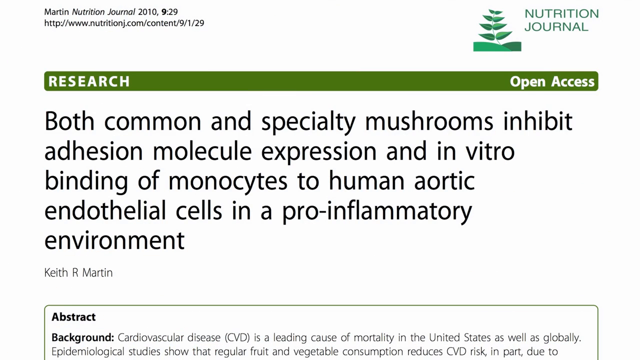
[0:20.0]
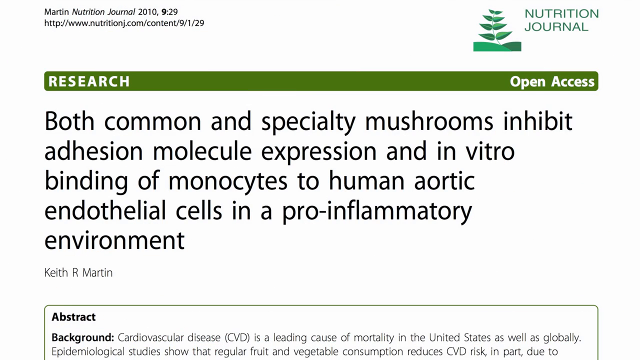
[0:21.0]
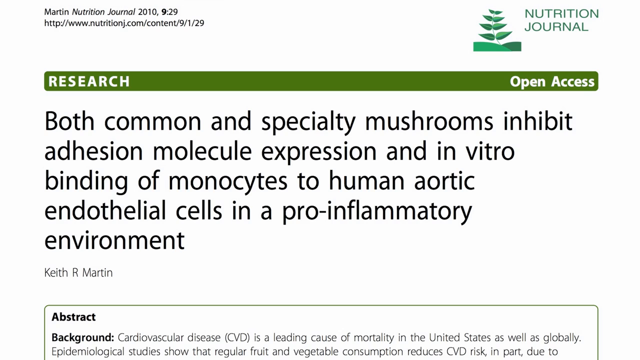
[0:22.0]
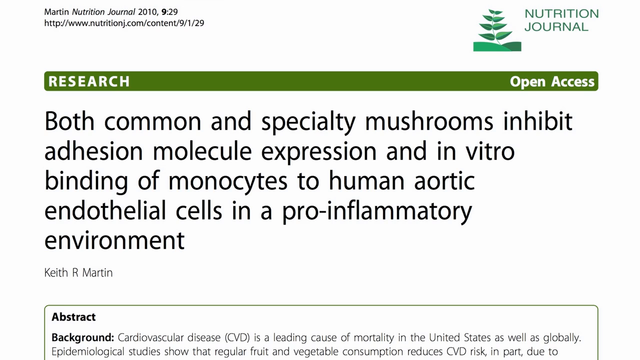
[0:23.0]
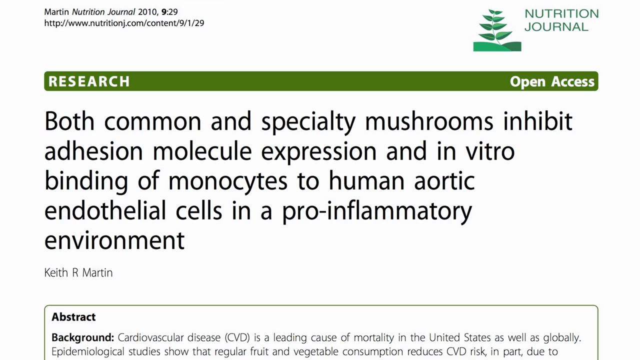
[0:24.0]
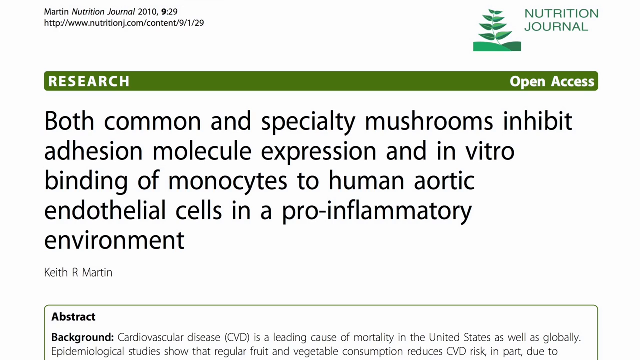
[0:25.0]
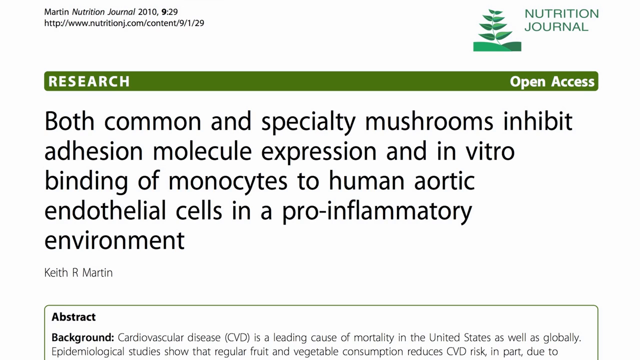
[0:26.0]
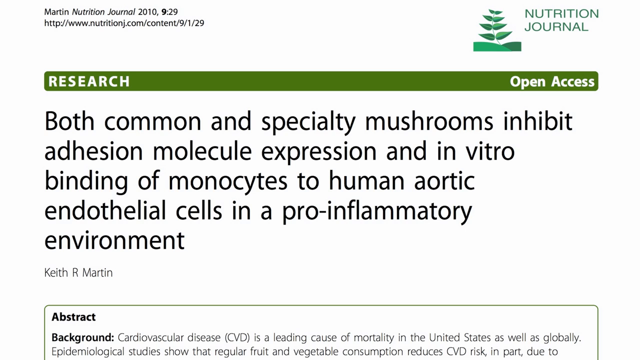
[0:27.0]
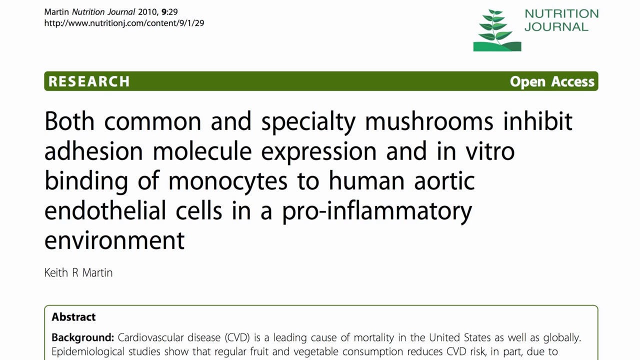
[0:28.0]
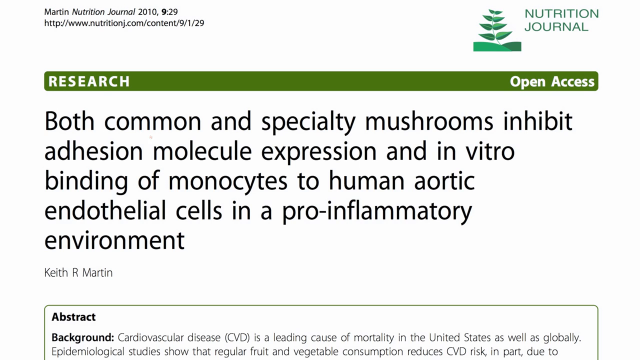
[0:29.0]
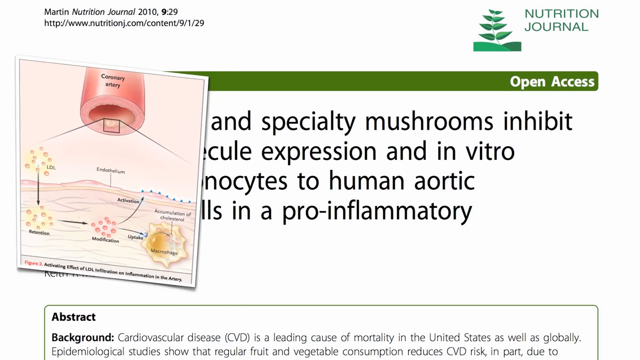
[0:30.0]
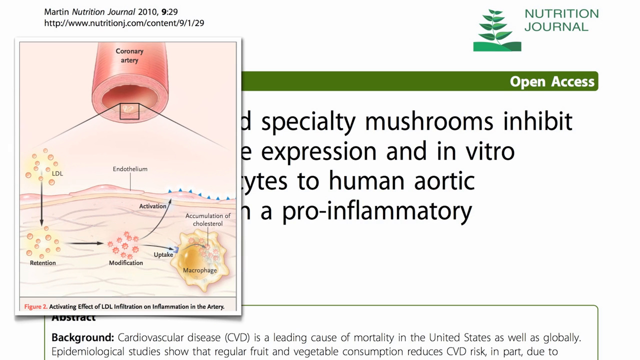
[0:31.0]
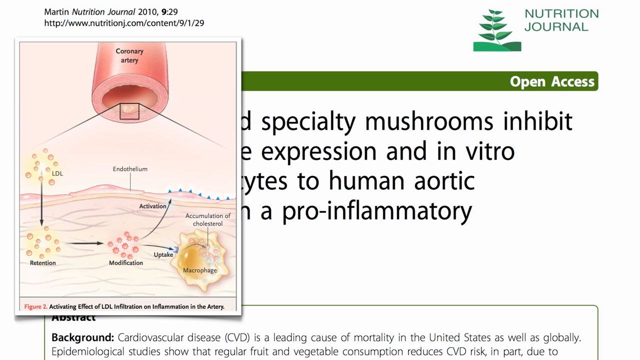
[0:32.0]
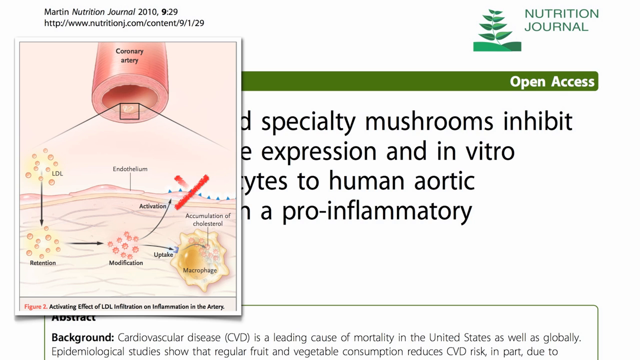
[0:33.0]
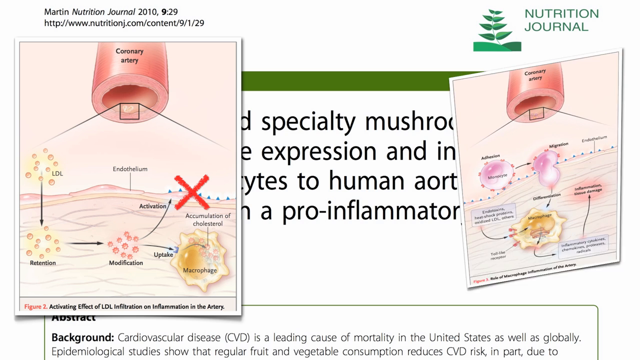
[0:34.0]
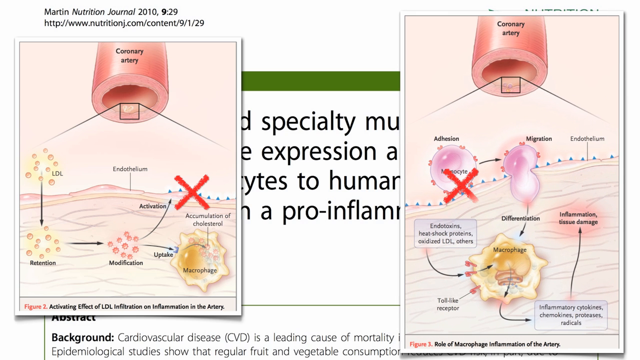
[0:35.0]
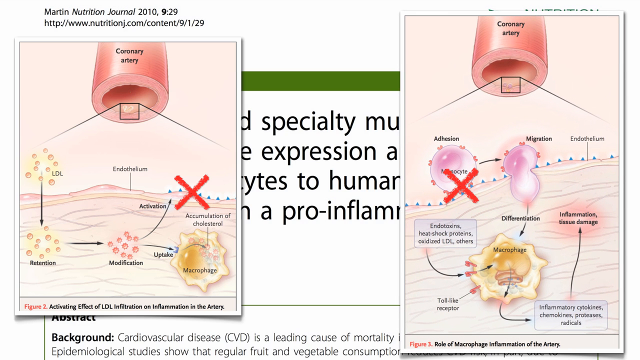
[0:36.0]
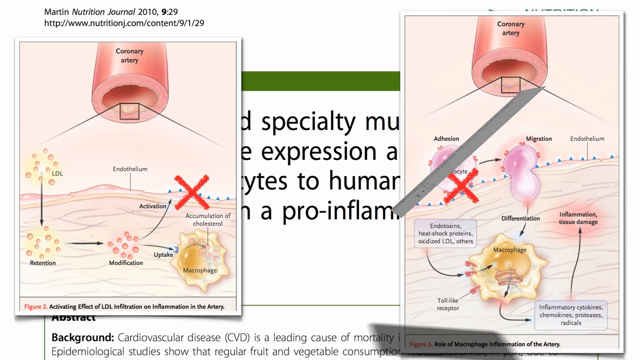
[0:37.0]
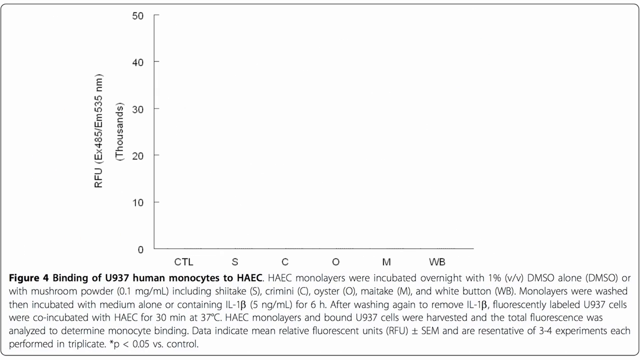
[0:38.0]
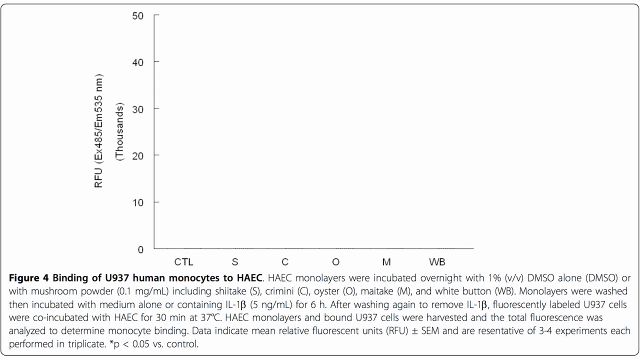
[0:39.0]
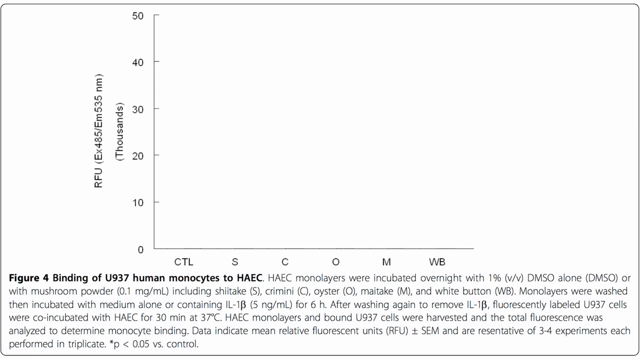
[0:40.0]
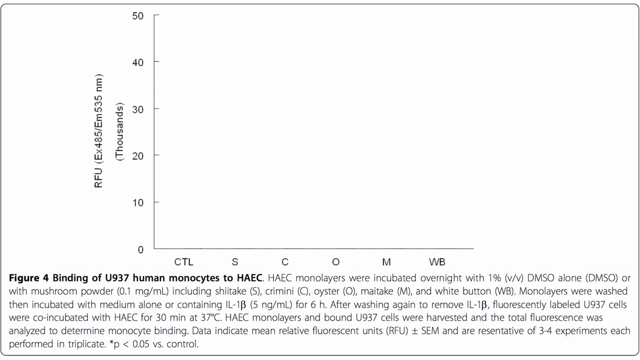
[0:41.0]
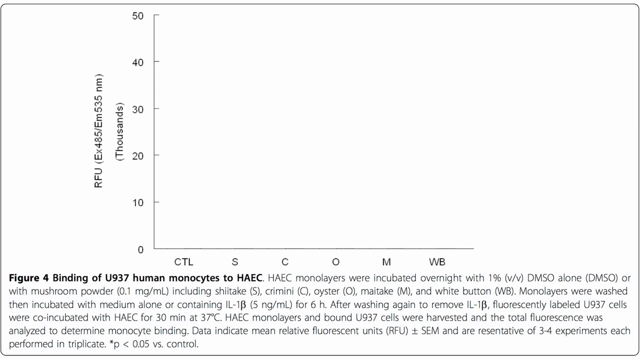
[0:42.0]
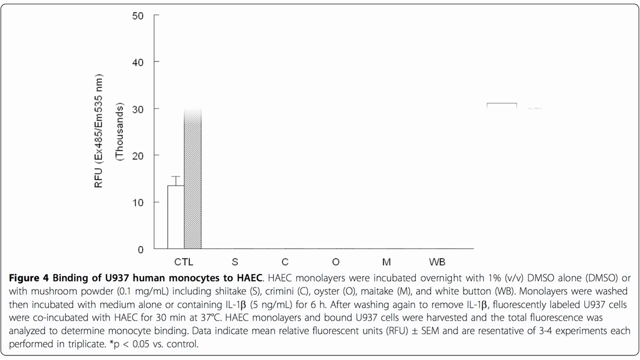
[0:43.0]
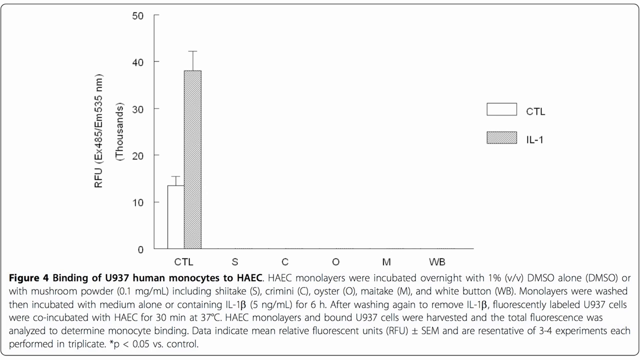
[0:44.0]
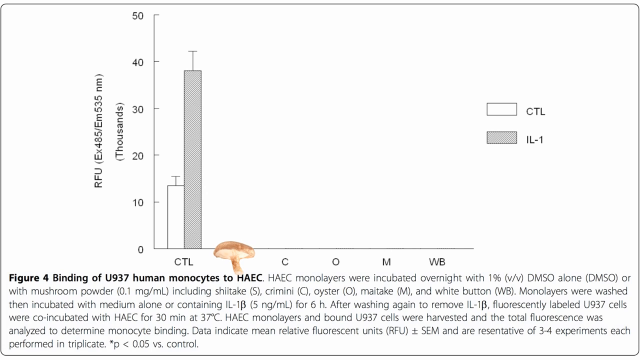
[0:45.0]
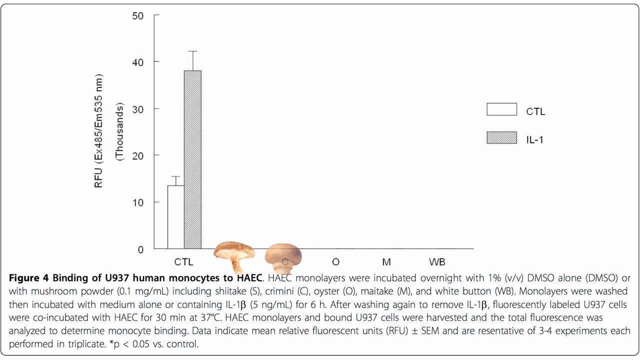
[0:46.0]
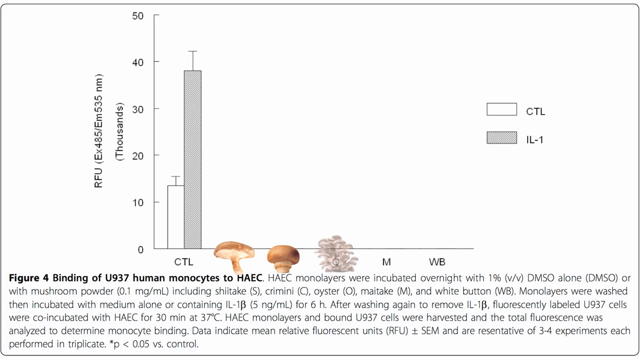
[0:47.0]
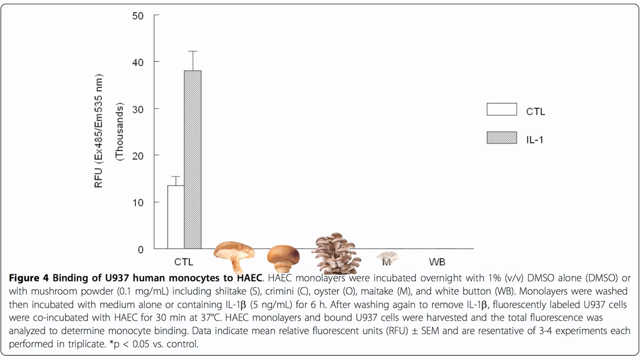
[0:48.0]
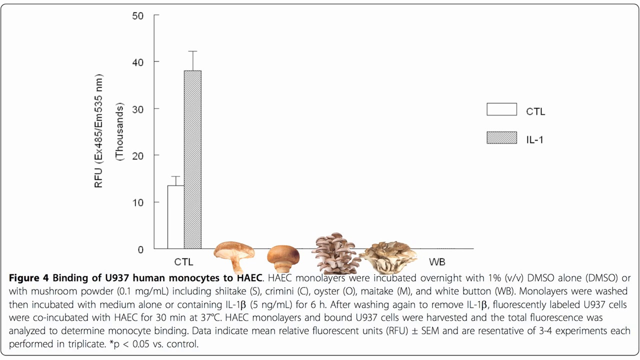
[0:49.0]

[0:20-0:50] A lot of text is on a white background. At the top left, in black text, it says "Martin Nutrition Journal 2010 9:29", and below that "HTTP://www.nutritionj.com/content/9/1/29". At the top right is what appears to be a green plant, next to which green letters read "Nutrition Journal". Below that area is a skinny forest-green bar with white text inside it: "research" on the left and "open access" on the right. Below this, black text reads "both common and specialty mushrooms inhibit adhesion, molecule expressions, and in vitro binding of monocytes to human aortic endothelial cells in a pro-inflammatory environment". Below that is the name Keith R. Martin.